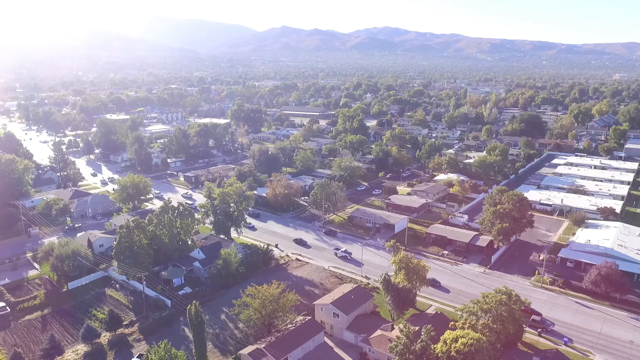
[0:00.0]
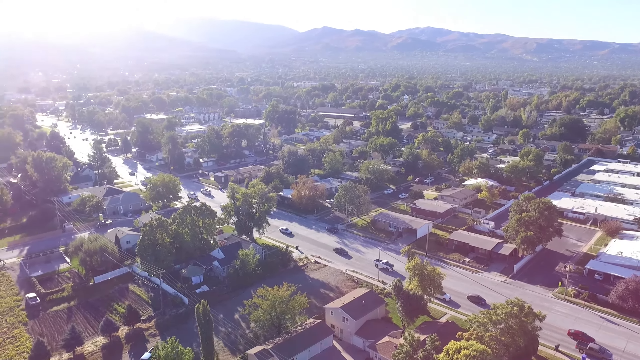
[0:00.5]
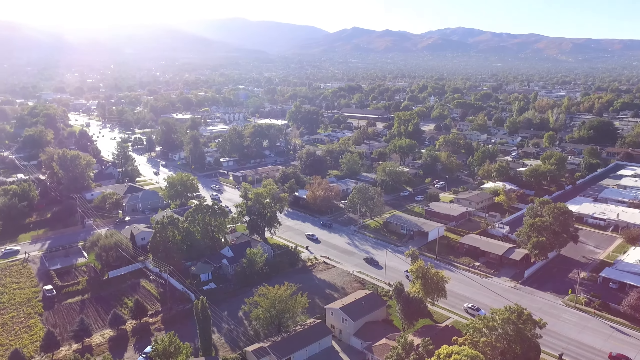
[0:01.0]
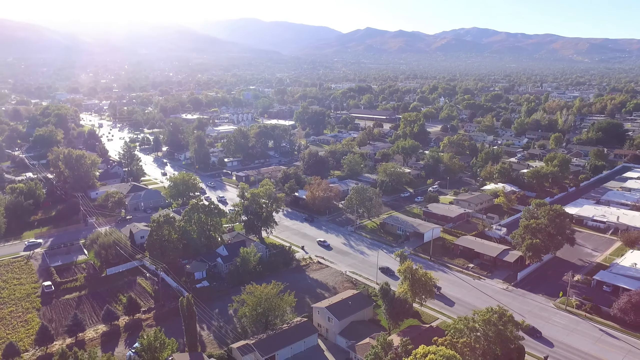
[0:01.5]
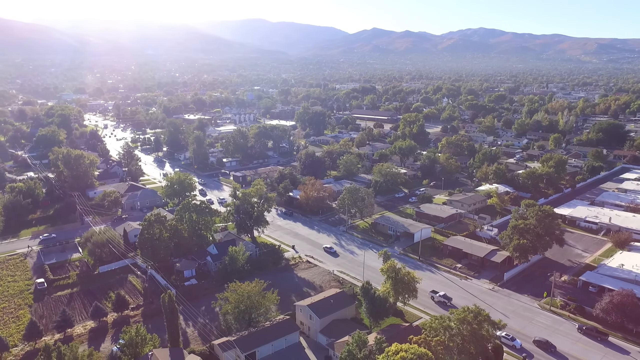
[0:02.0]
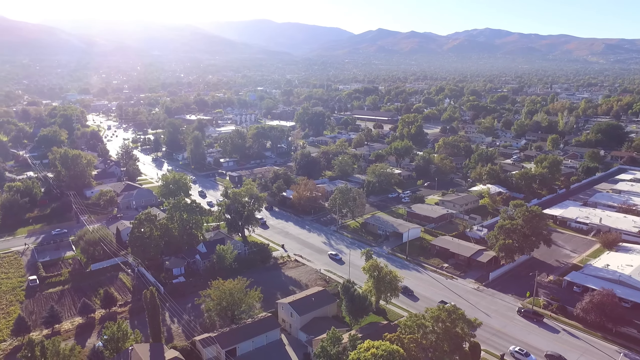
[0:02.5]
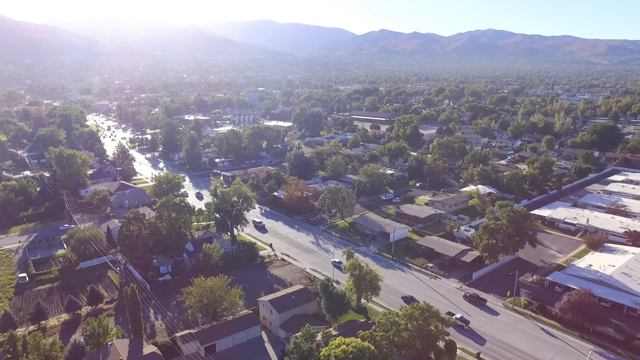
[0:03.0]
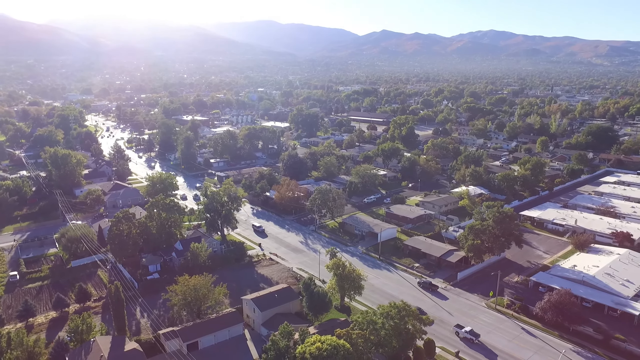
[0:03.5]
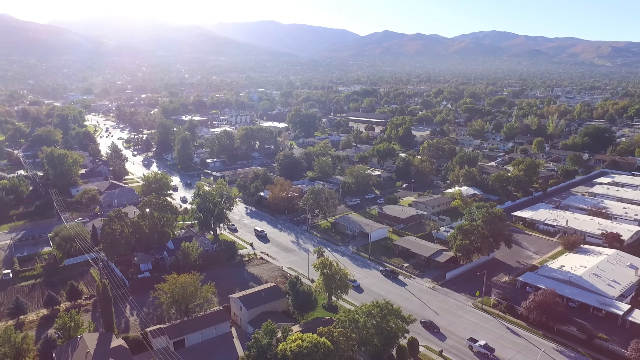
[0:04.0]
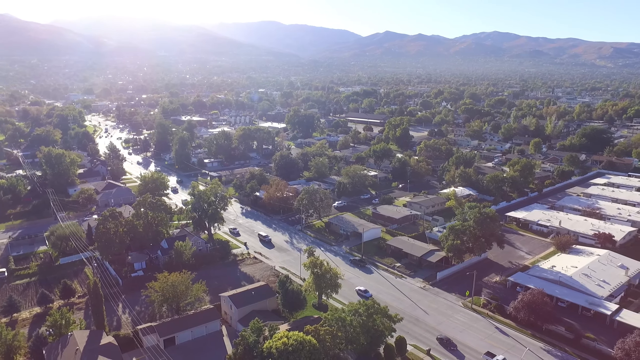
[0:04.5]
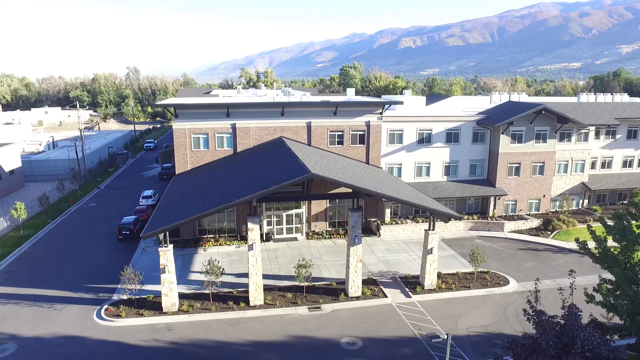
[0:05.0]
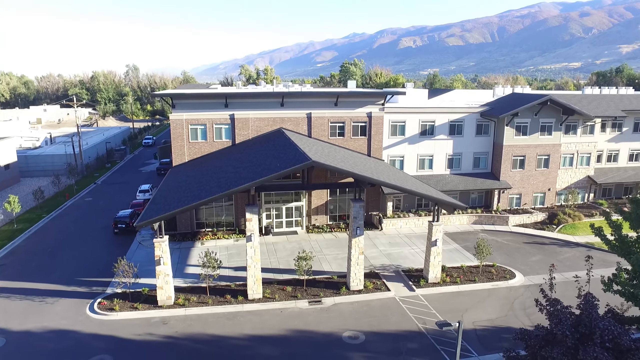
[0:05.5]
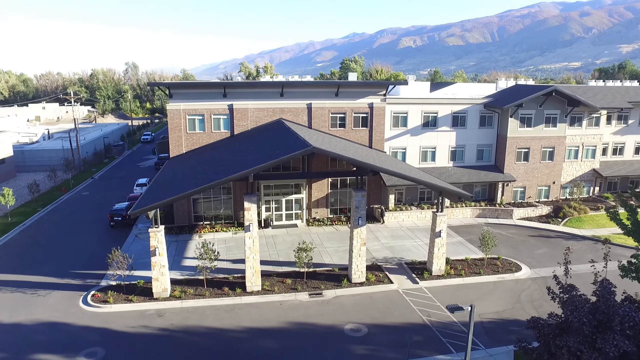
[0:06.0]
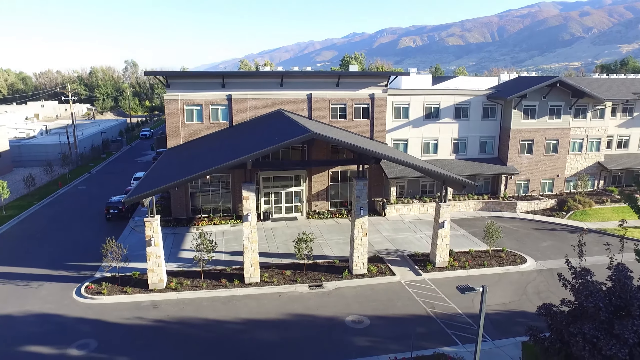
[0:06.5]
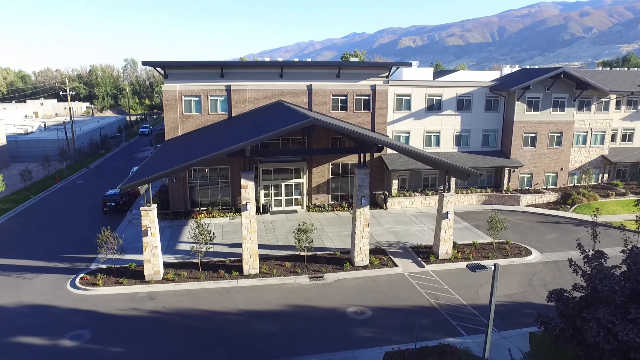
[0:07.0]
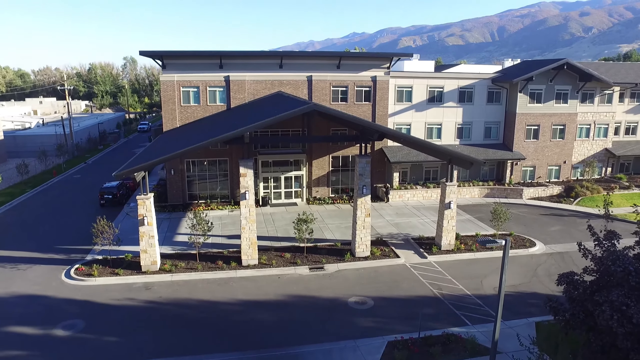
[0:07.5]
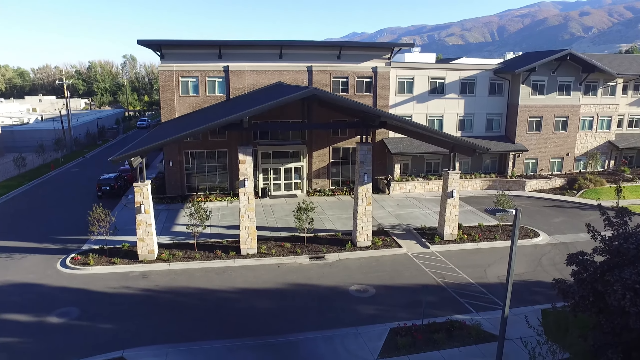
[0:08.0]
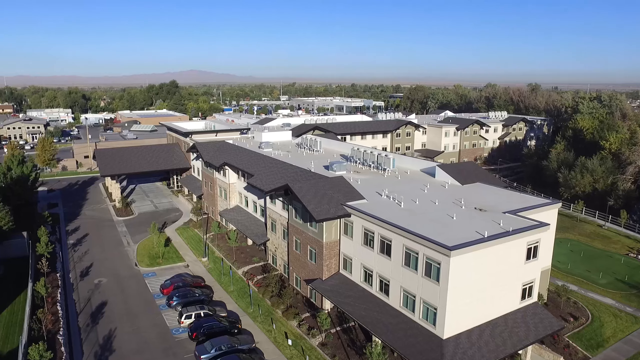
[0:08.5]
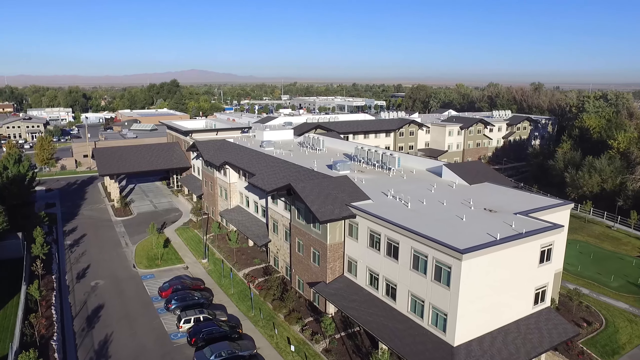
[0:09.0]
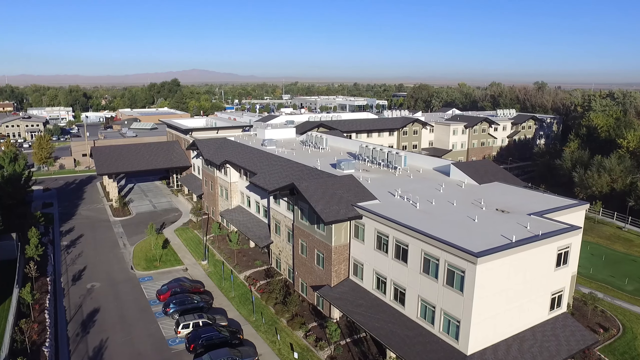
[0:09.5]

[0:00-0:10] Drone footage opens overlooking a busy road with a big crossroads. The roads are quite big and wide, quite a few trees are dotted around, a few cars drive around, and in the background are kind of hilly mountains under a very blue sky. The footage then changes to a particular building, possibly office blocks, that looks like it might be quite newly built. It has a kind of forecourt, like at a hotel, where cars can drive in, under a big, kind of sloped roof held up by four stone pillars. The building is quite modern looking and looks like it could be a hotel or conference centre. A big, wide road leads up to it, and in the background are hills, mountains and a bright blue sky on a very bright day. There are some new trees at the front of the building and a few very well maintained lawns.